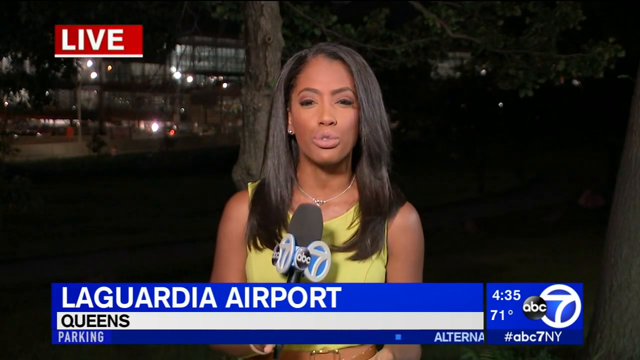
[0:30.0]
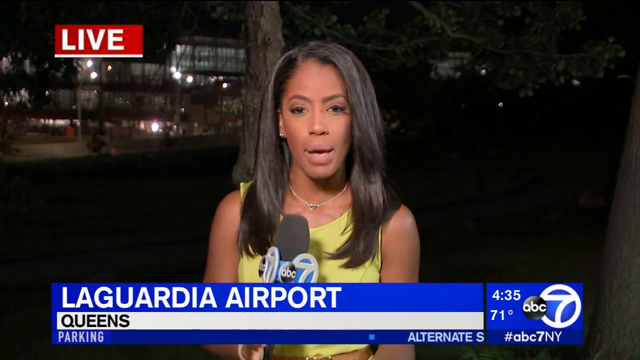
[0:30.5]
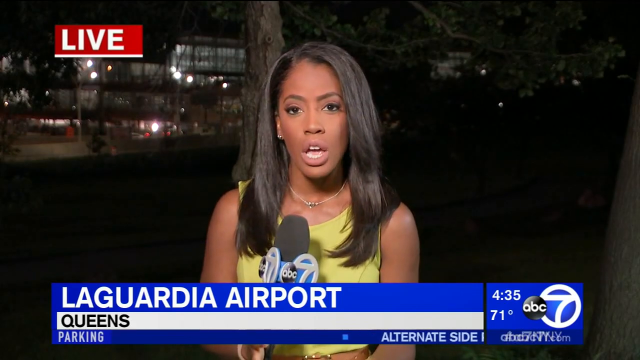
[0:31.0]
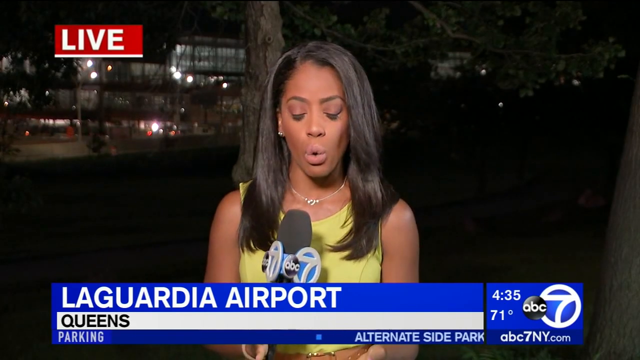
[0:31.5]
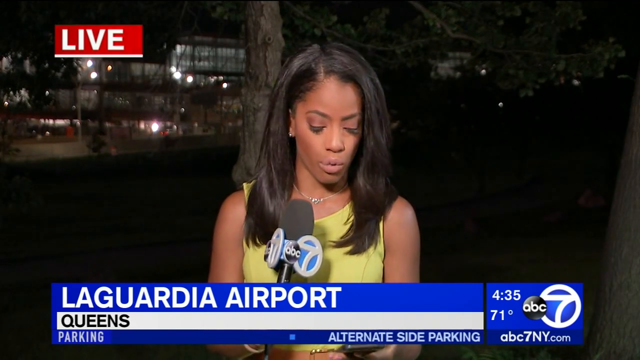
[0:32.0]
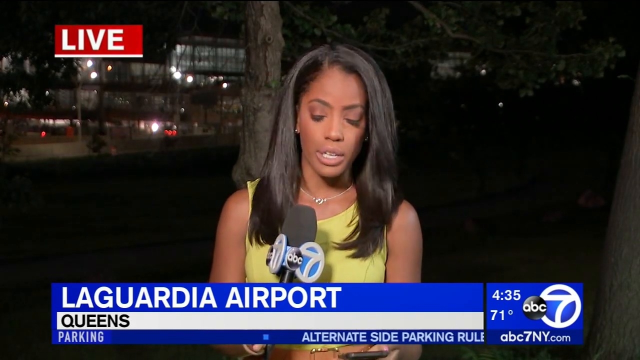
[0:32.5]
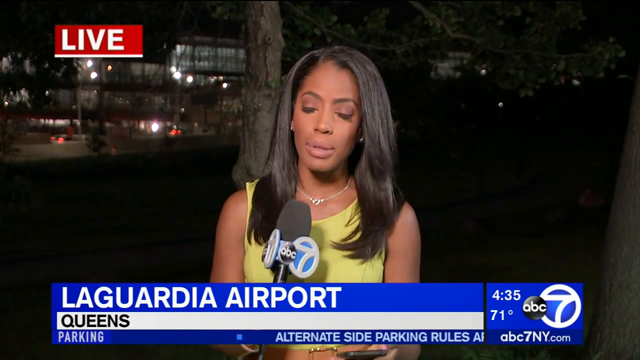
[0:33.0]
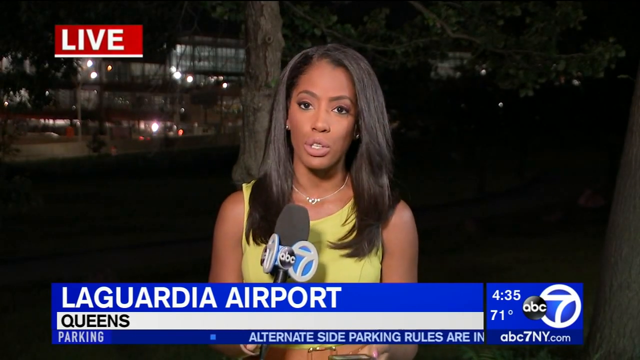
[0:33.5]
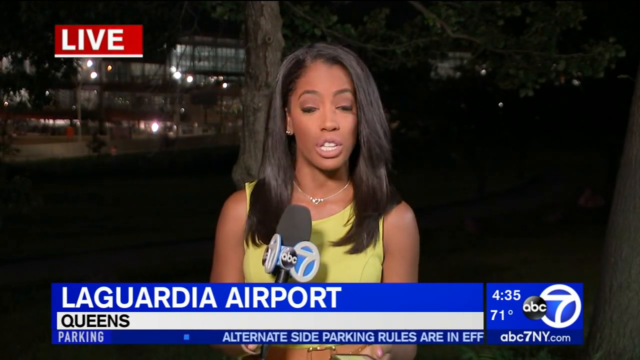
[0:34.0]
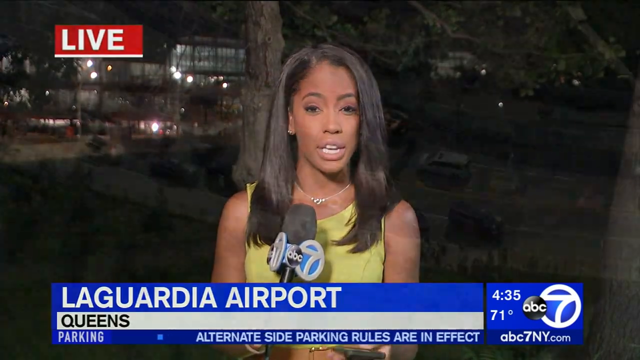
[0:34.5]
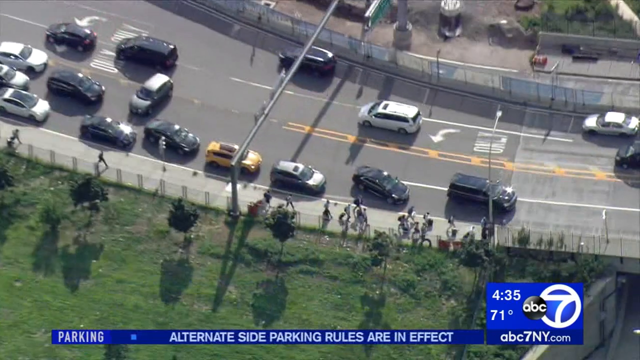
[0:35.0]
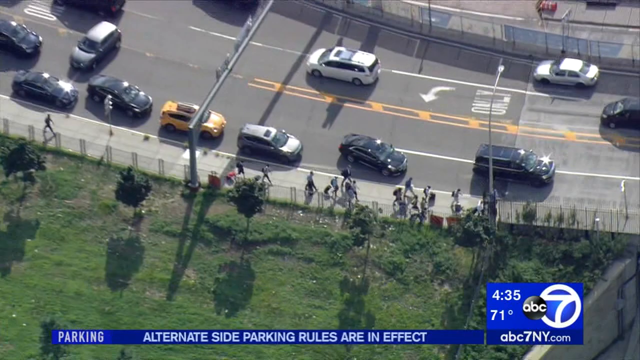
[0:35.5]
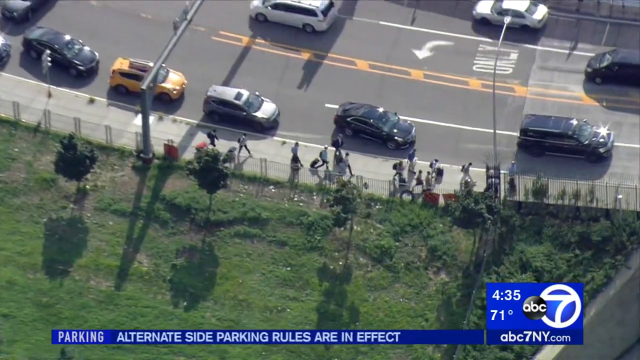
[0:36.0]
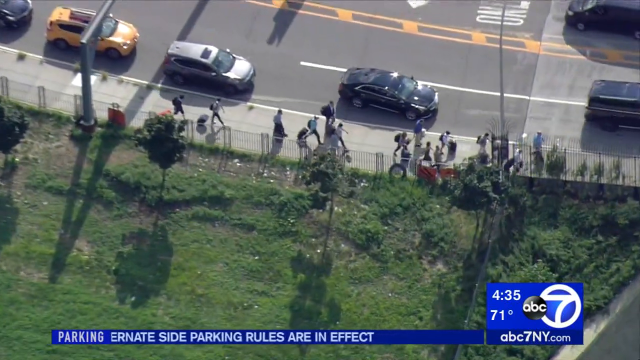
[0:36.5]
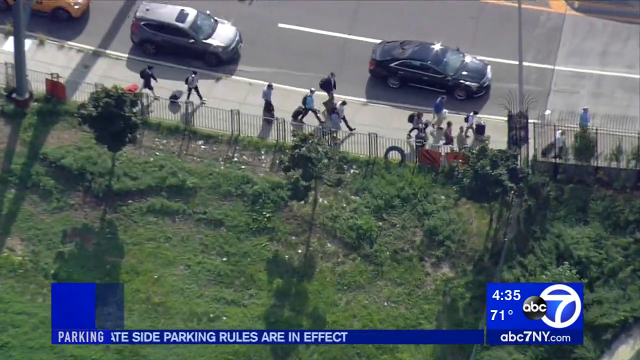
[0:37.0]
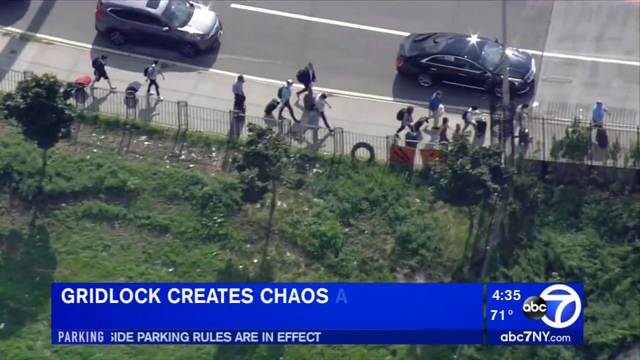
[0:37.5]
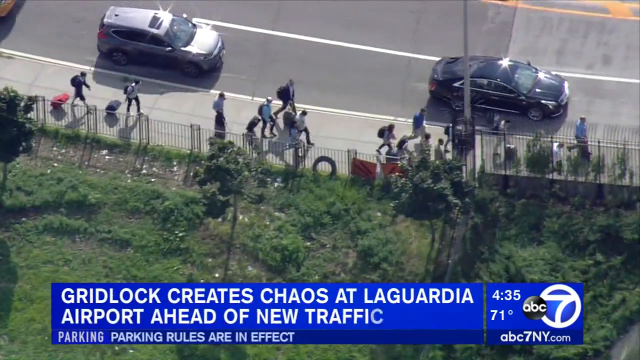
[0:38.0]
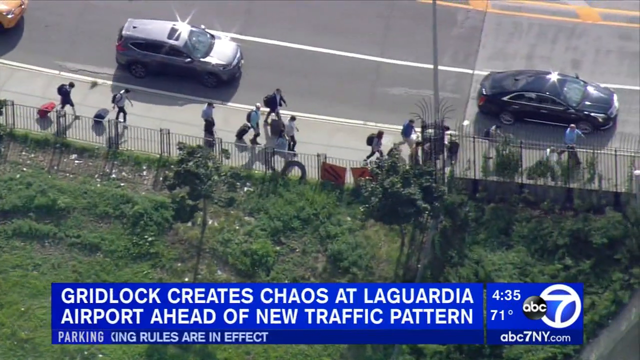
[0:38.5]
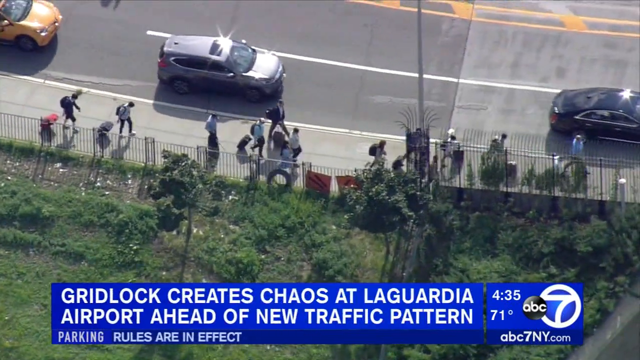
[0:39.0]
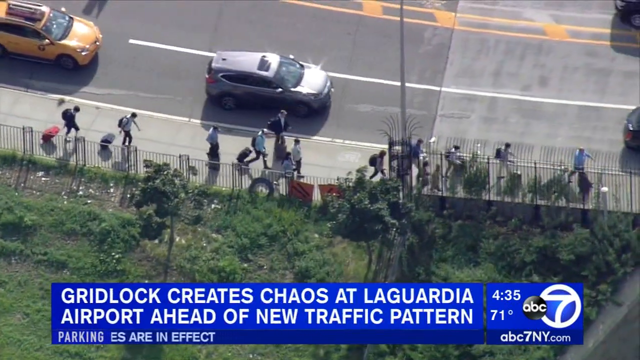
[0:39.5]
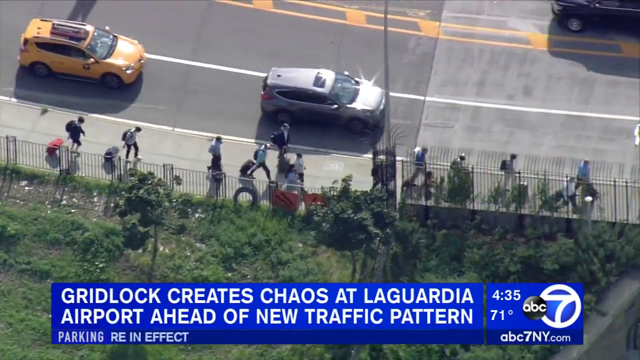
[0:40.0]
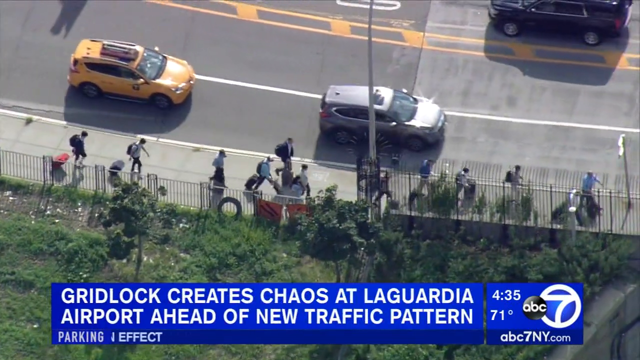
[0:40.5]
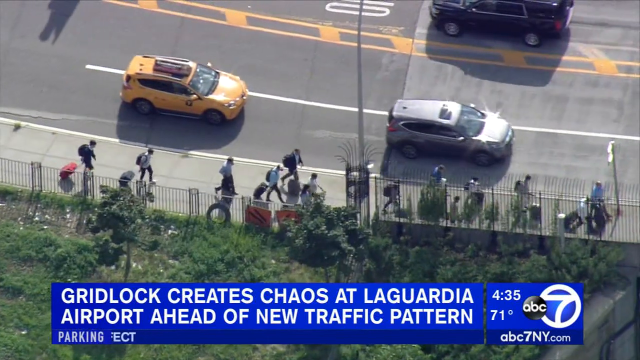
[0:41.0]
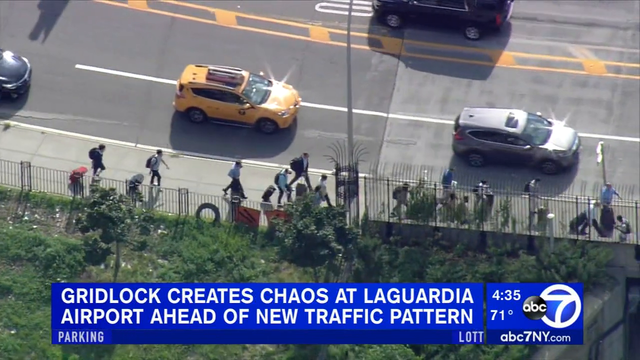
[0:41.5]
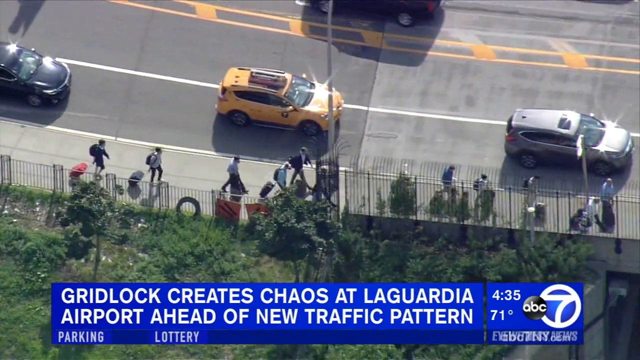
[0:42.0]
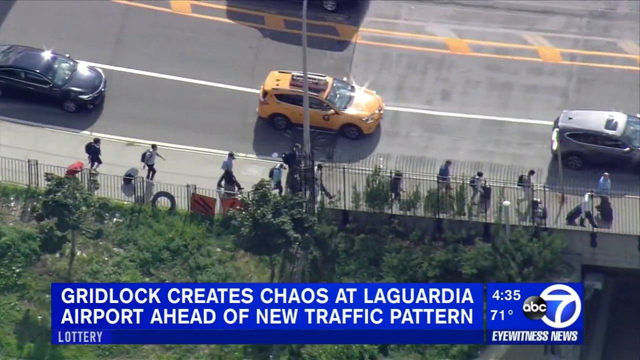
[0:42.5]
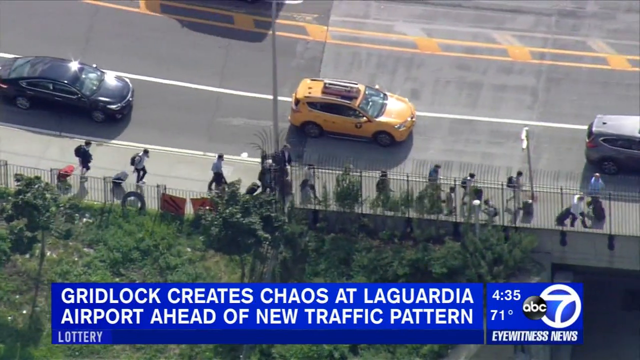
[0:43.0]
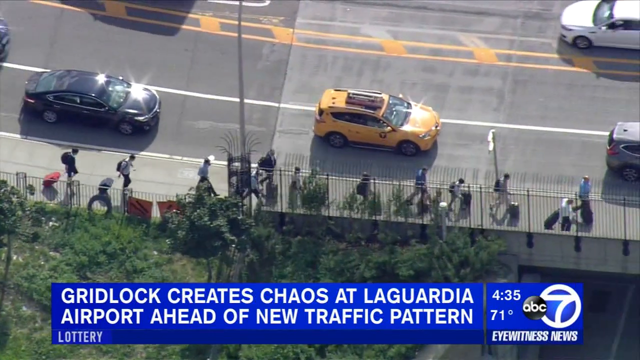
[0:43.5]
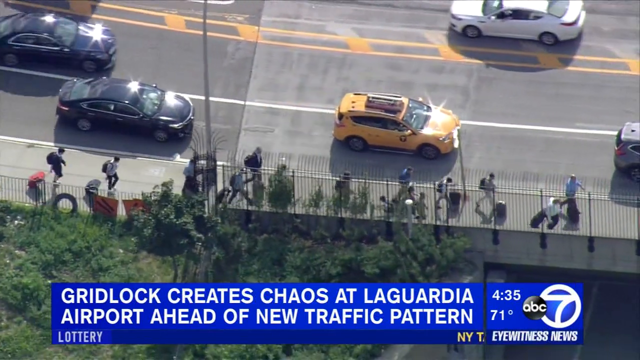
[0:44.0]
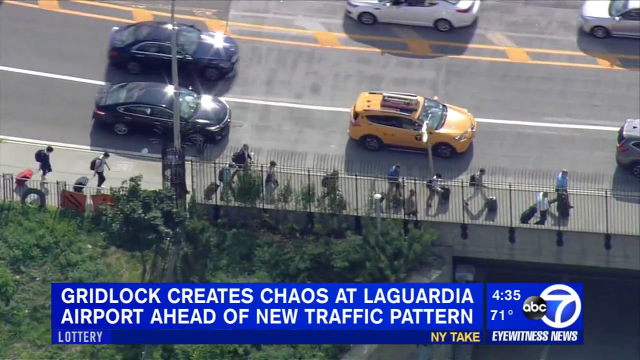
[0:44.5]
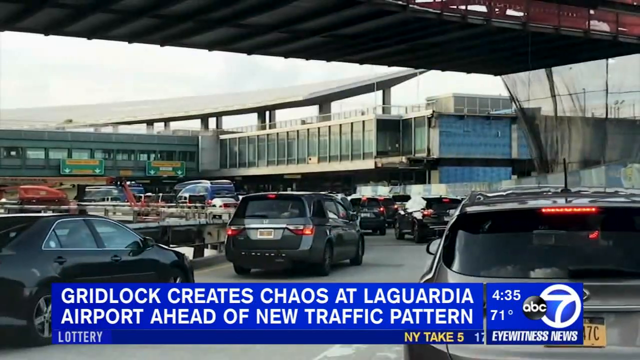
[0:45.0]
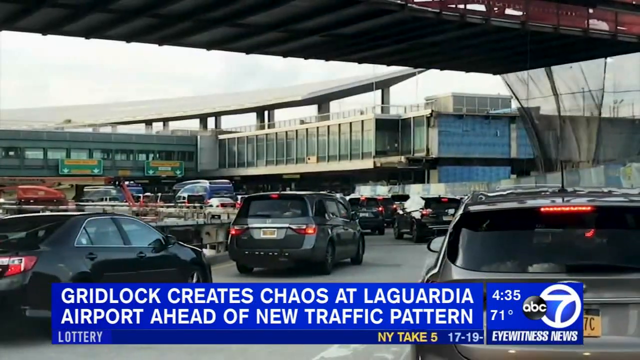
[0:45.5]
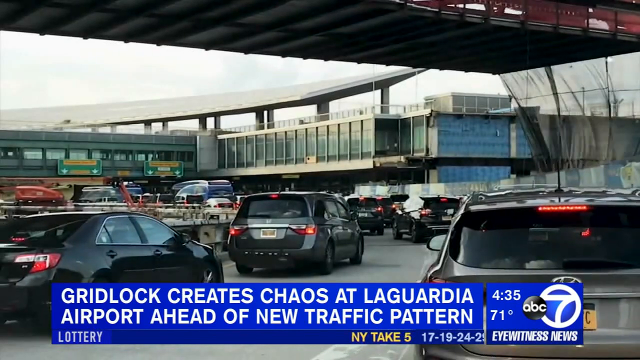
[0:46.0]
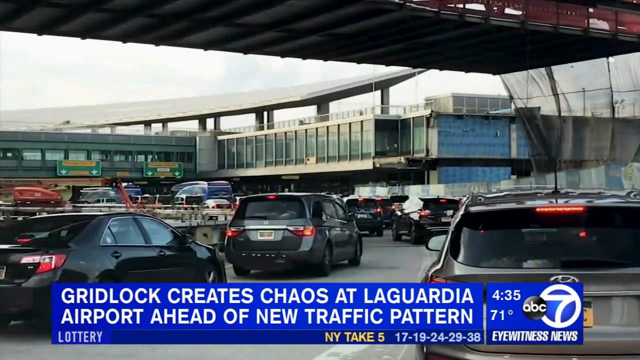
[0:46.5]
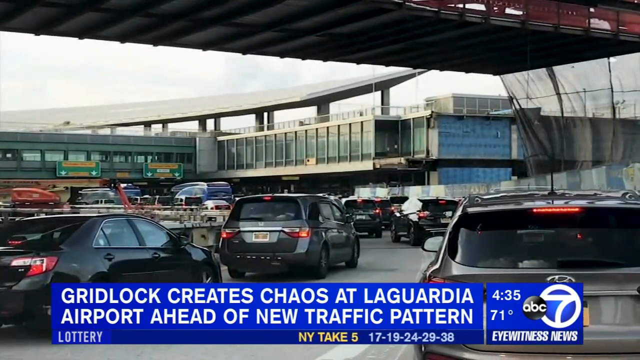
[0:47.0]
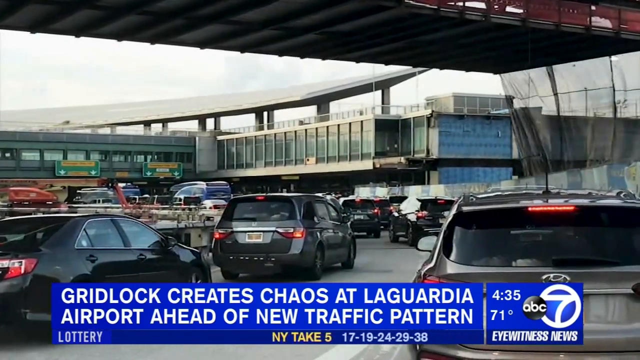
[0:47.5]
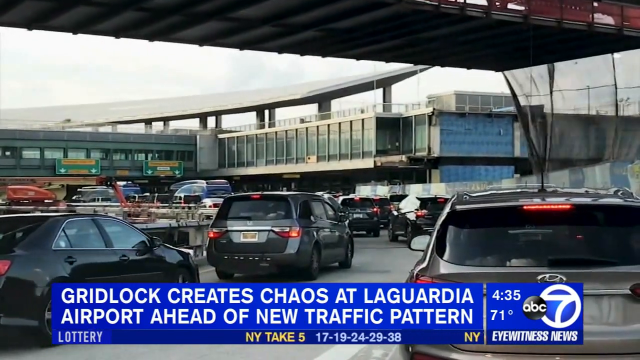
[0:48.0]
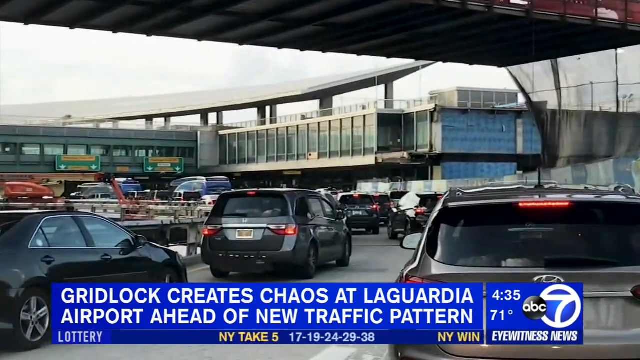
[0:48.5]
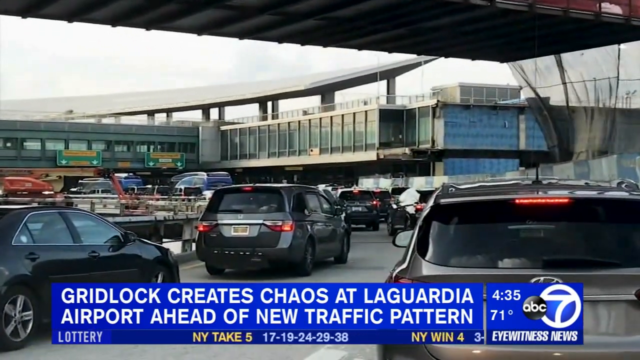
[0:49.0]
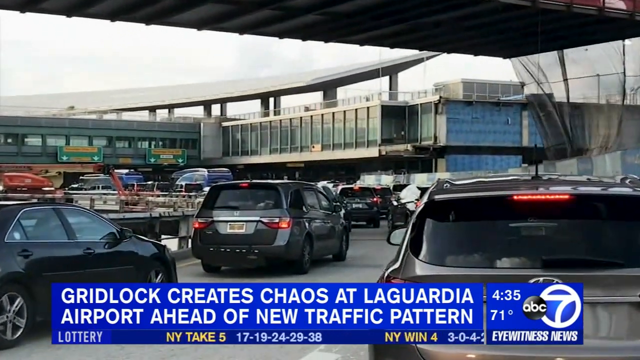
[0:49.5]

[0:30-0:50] A lady in her mid-thirties wears a sleeveless yellow top or dress. Her hair is long and black, she has beautiful eyes, and she holds a black microphone with "ABC" written on it in blue. In the top left corner is the word "live" in white on a red backdrop, and underneath is "LaGuardia Airport". Behind her is a building with many lights, and there are cars in the road, some parked and some moving. She is standing under a tree and seems to be a news reporter from ABC News. Text reads "alternate side parking rules are in effect" and "Gridlock creates chaos at LaGuardia Airport ahead of new traffic pattern", from ABC Eyewitness News. Cars are stuck in traffic close to LaGuardia Airport, and pedestrians walk along dragging their bags, perhaps having left their taxis behind because of the traffic.